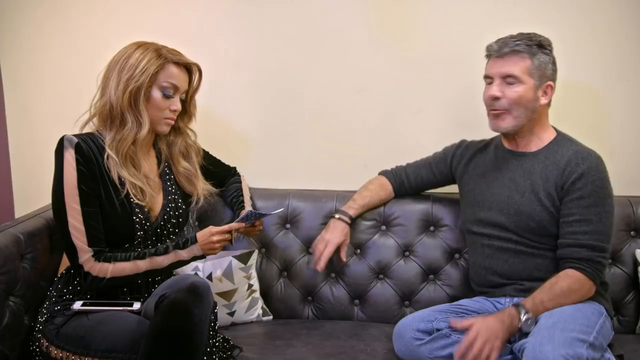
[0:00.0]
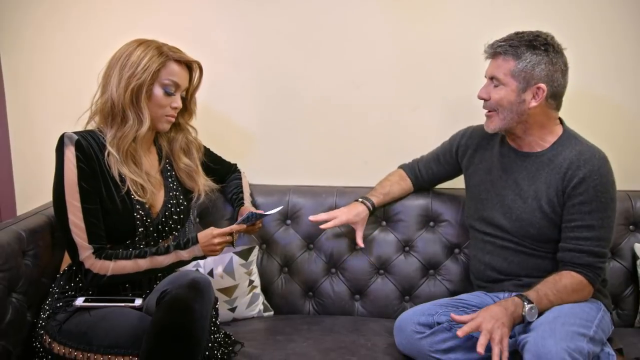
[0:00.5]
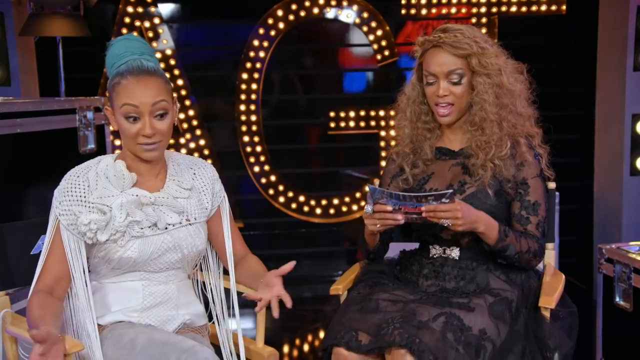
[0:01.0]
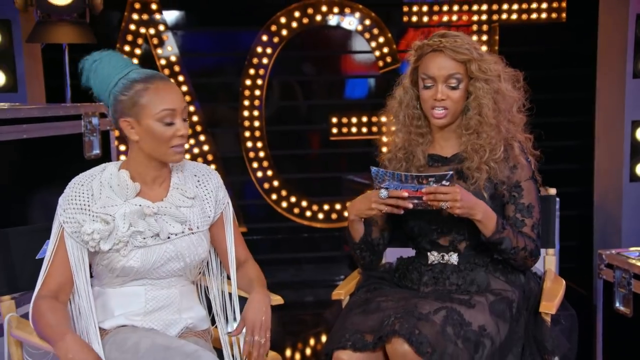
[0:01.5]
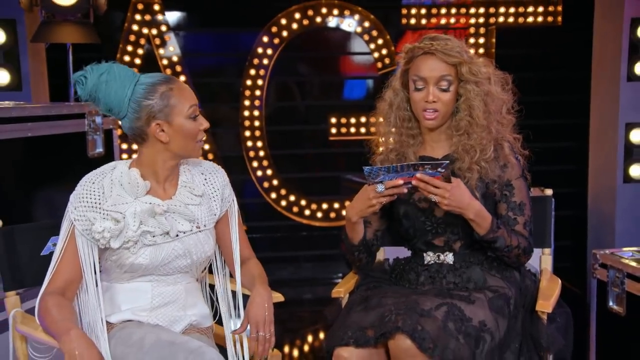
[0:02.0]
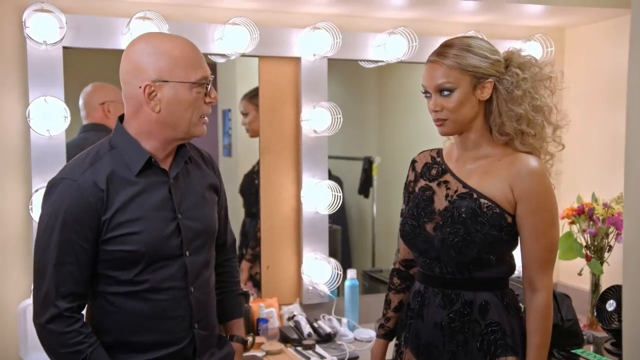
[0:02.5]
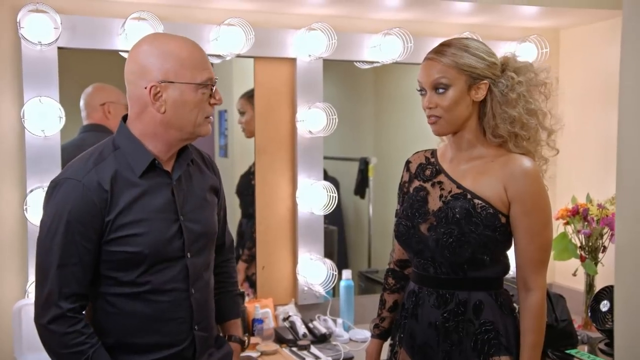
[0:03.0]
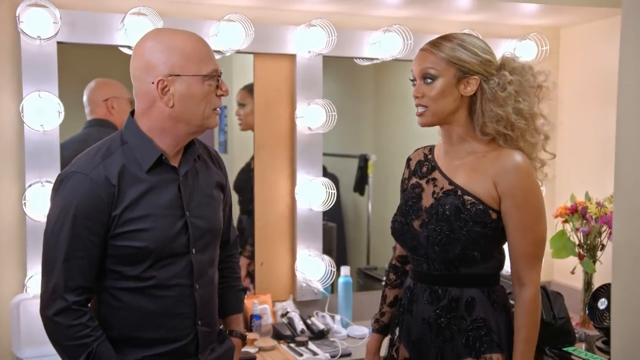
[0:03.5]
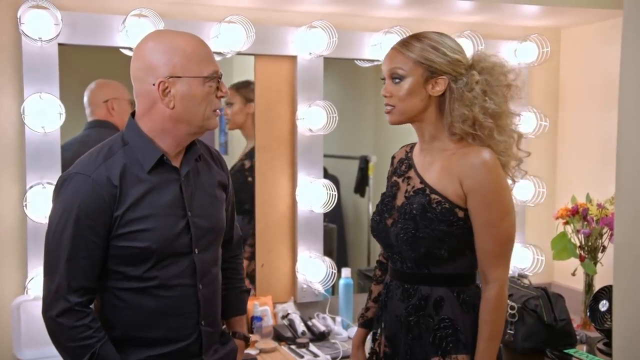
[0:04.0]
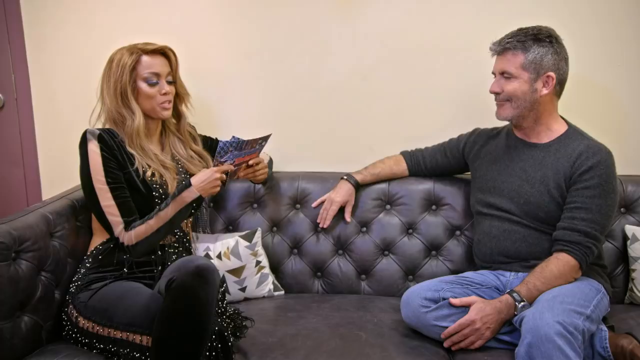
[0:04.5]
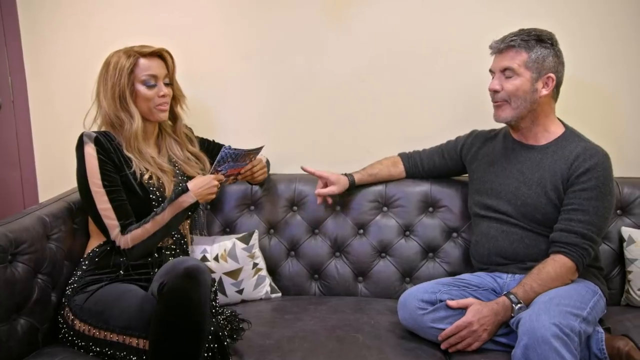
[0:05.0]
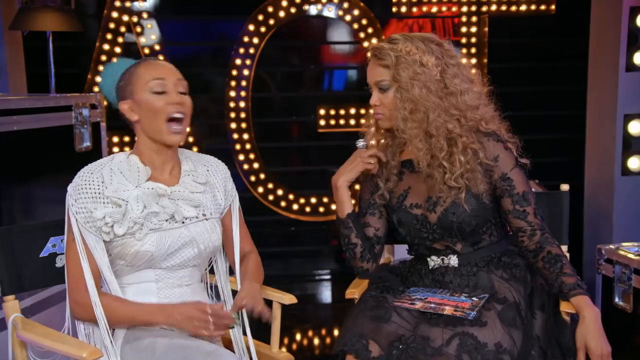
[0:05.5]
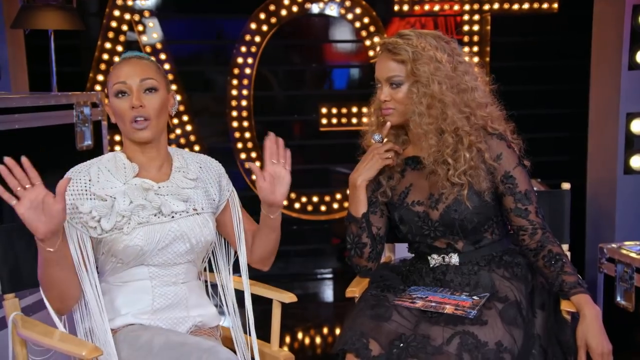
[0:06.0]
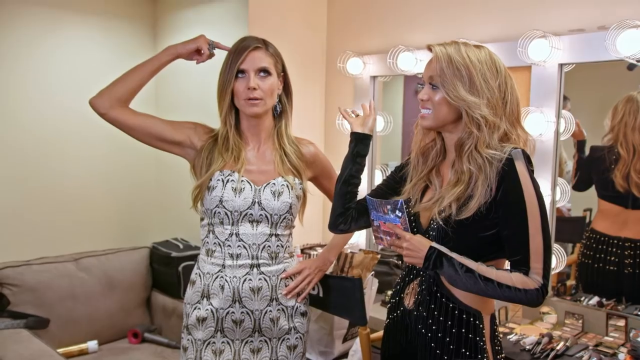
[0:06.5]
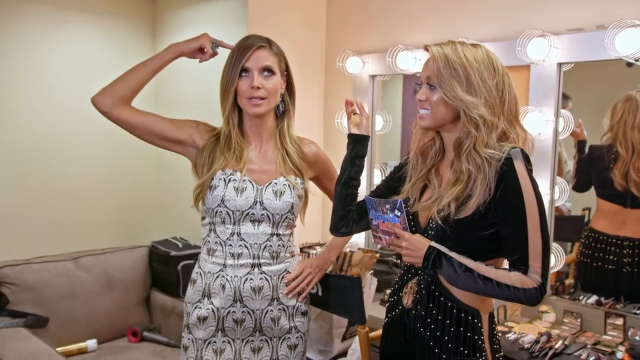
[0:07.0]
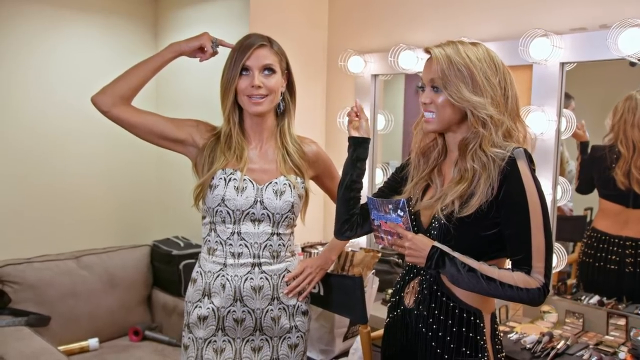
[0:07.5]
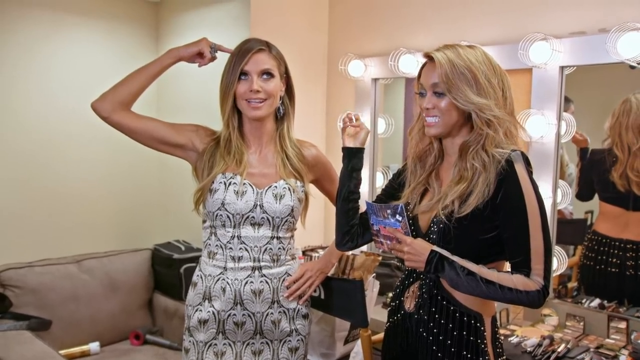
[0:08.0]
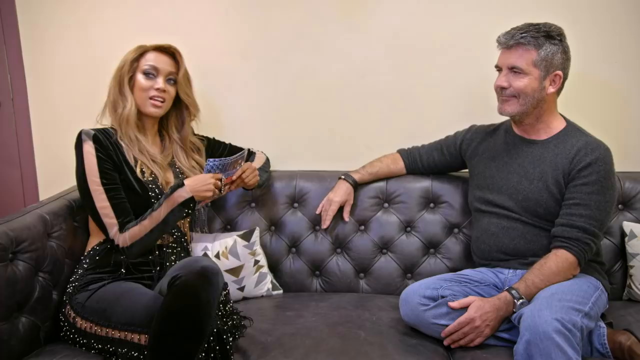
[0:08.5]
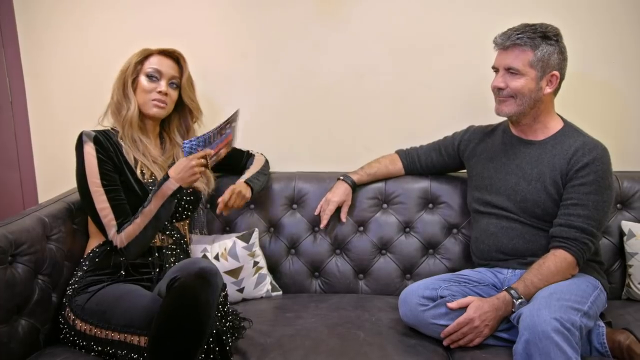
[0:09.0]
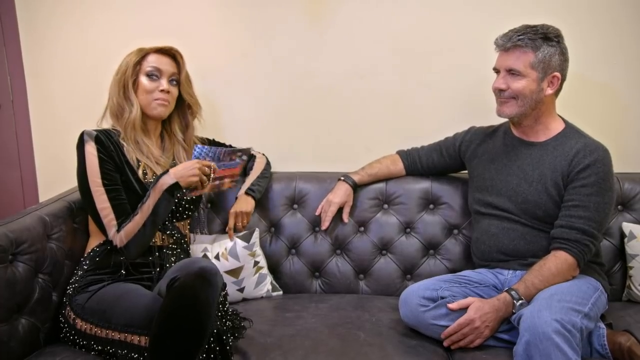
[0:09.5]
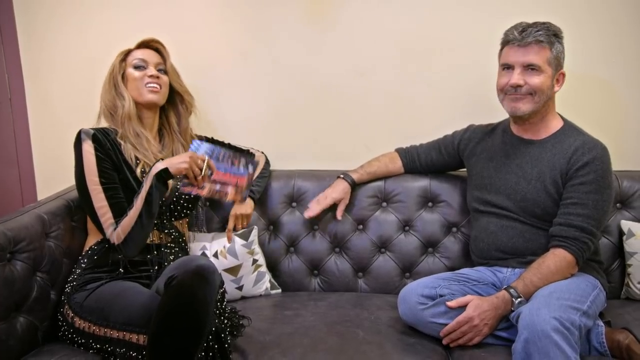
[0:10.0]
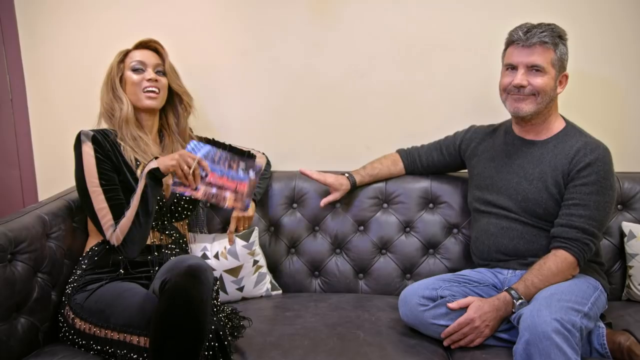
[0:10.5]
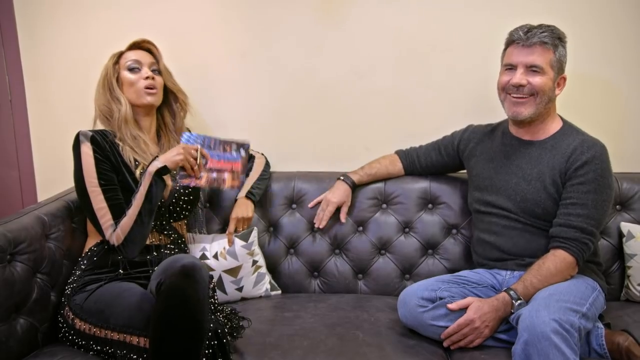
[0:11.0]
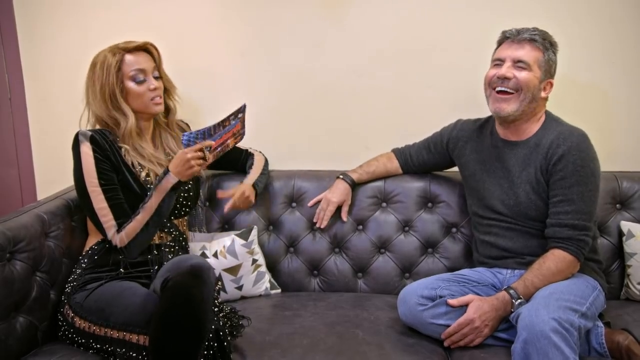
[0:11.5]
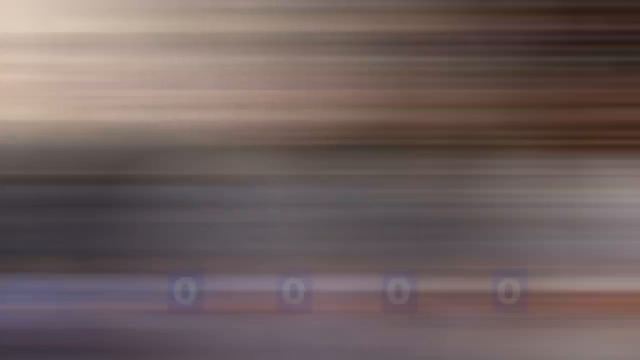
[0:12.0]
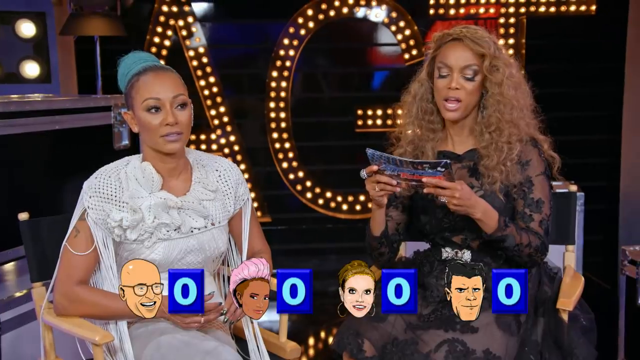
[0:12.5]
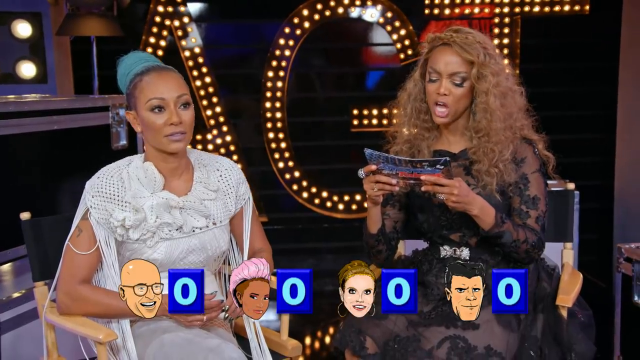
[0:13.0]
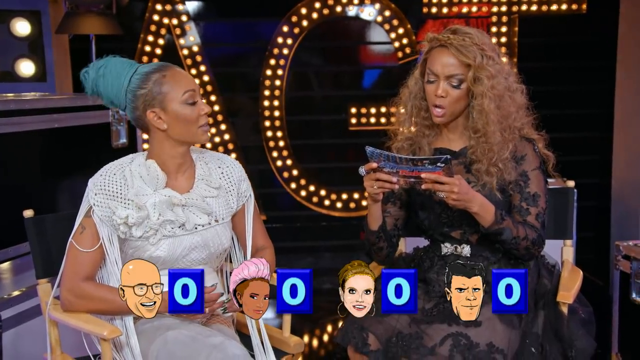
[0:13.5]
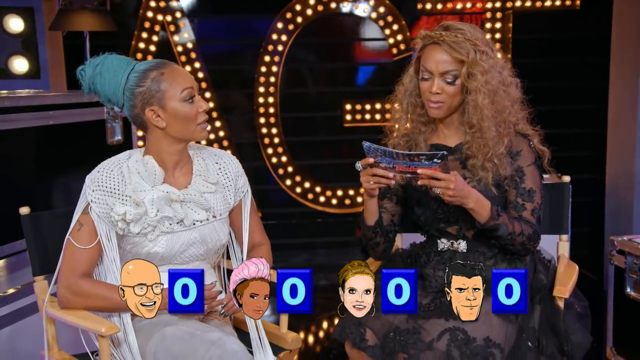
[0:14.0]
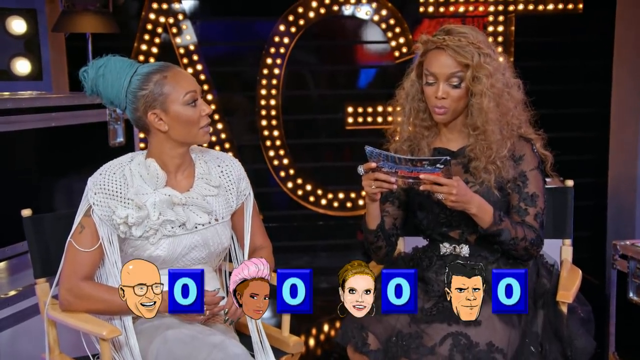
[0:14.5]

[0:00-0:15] Tyra Banks grills the judges on America's Got Talent, with clips of her alongside each judge: first Simon Cowell, then a woman whose name is not given, then Howie Mandel, and then Heidi Klum. Tyra is shown on the couch and in a chair, with her notes, talking to them one by one. She stands with Heidi Klum in Heidi's dressing room while Heidi puts her finger to her head. Tyra is pretty aggressive with them. She reads her questions while standing with Howie, moving in close to him as she speaks. She continuously reads questions from the notes she holds in front of her, keeping a serious look on her face except with Heidi, where she smiles; the rest of the time she is intent on asking the questions from her note cards. The video keeps flipping from scene to scene and from judge to judge.